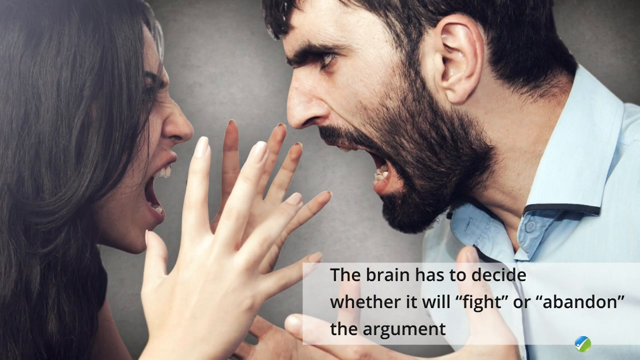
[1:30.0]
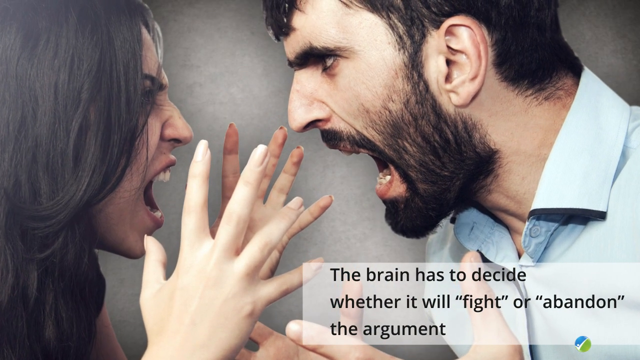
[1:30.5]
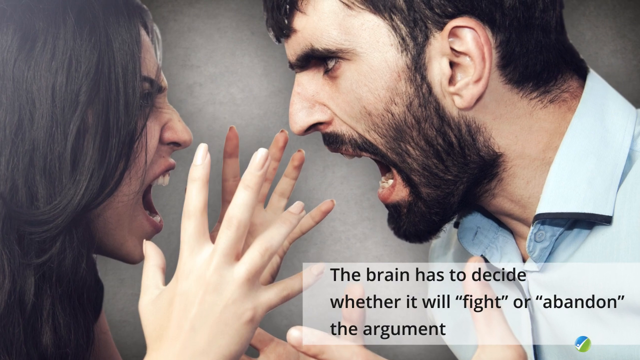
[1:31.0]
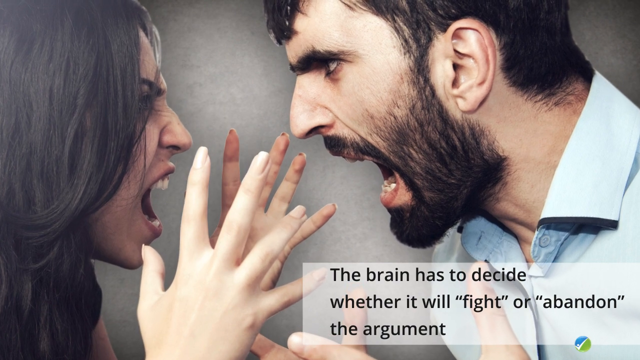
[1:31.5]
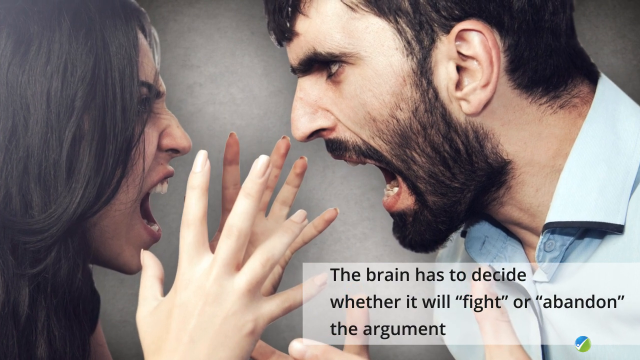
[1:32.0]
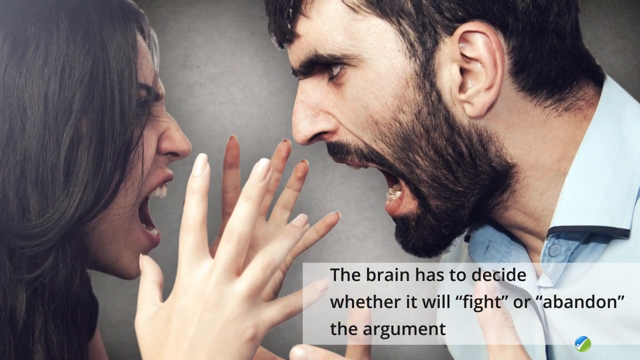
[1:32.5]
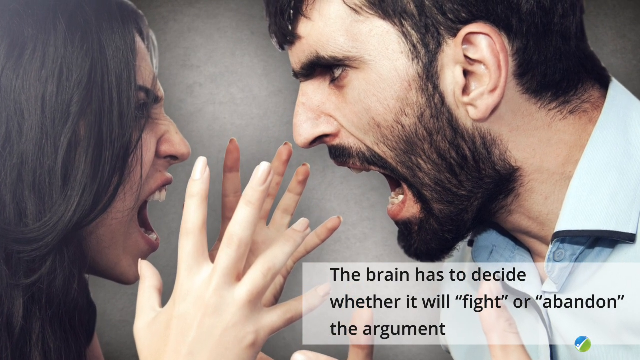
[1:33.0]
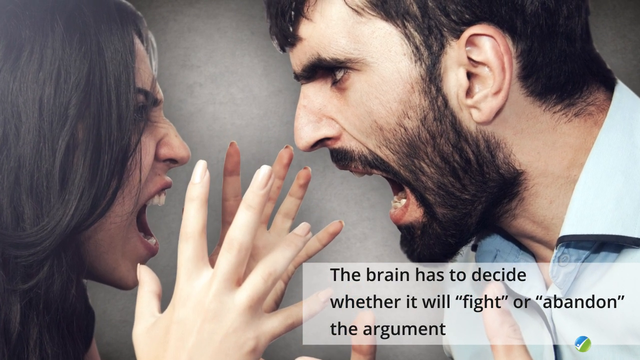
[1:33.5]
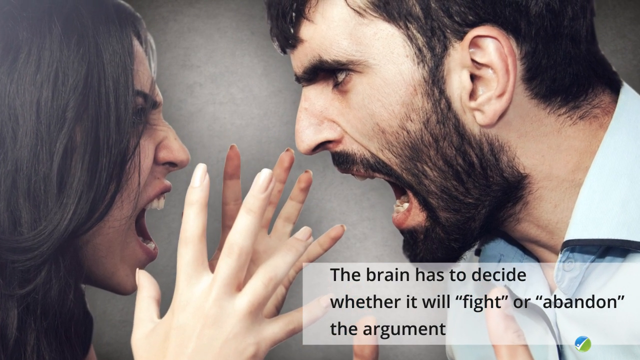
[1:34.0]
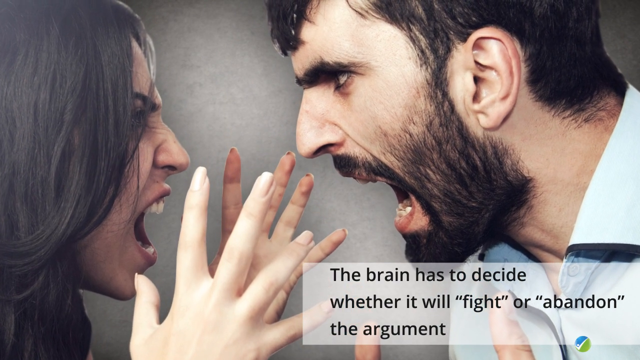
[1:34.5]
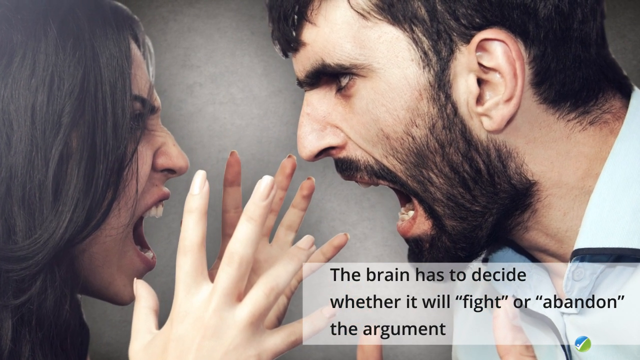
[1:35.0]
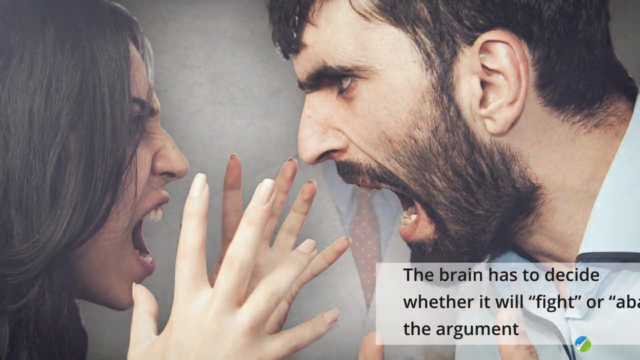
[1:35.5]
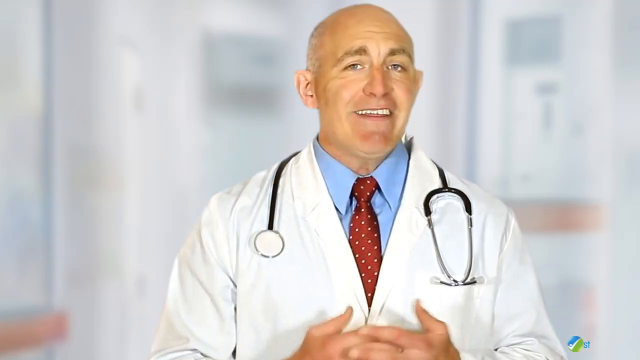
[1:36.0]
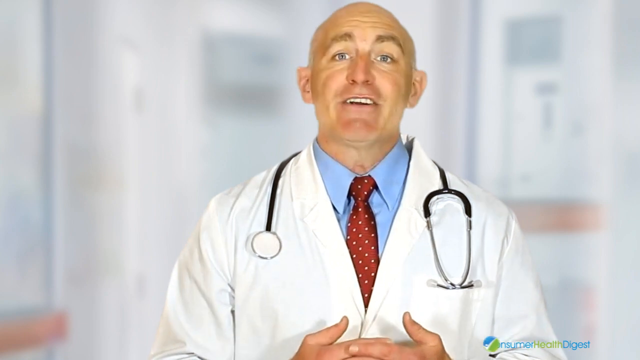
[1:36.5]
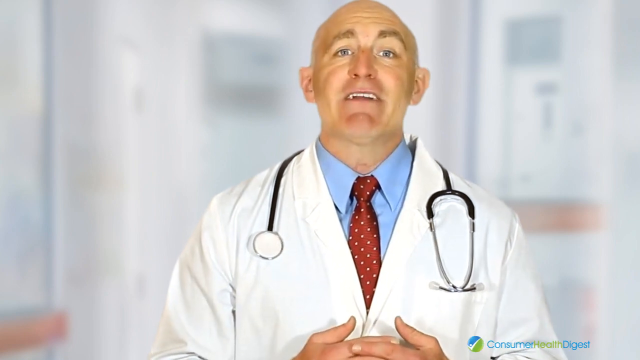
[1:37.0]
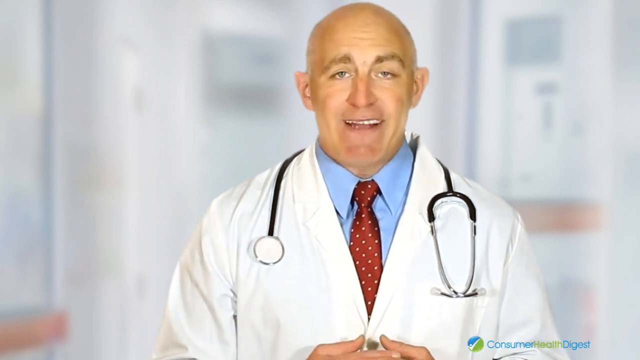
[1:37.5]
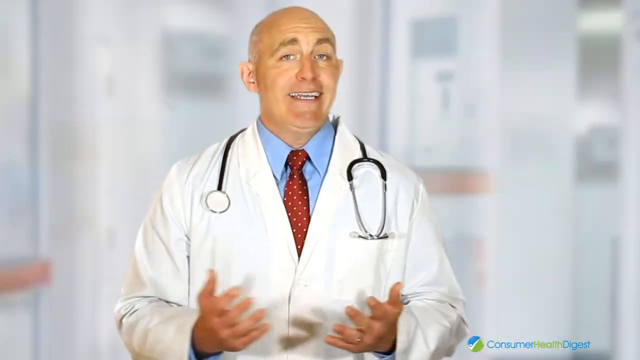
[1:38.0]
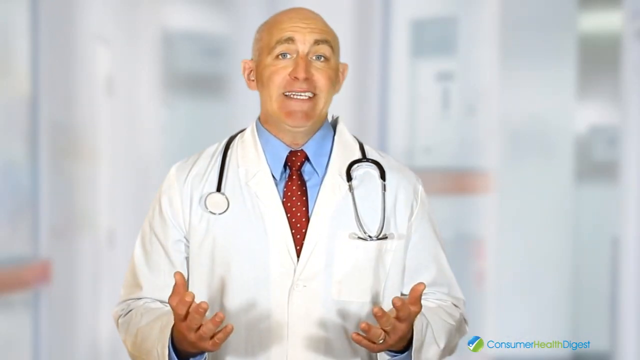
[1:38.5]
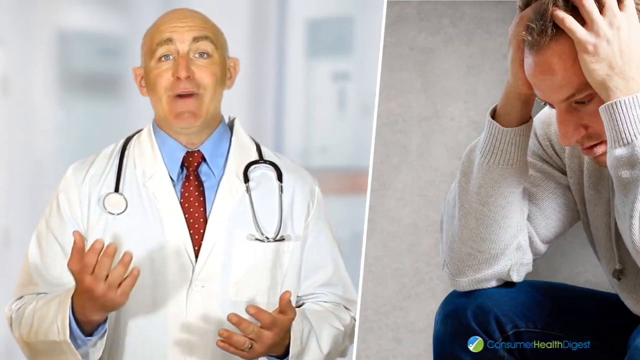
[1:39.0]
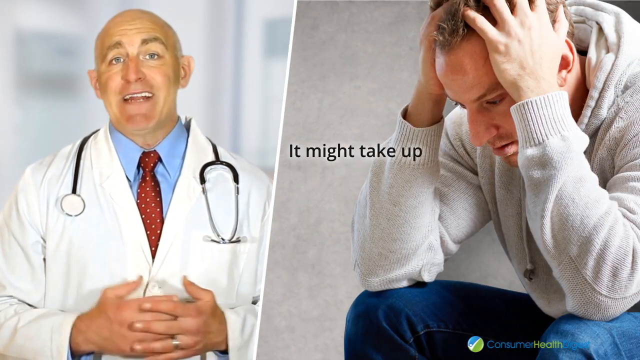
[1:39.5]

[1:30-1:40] The still image of the couple fighting remains on screen: the man on the right is screaming at the woman on the left, who is yelling right back at him with her hands up and open in an exasperated manner. In the bottom right corner, text reads "the brain has to decide whether it will fight or abandon the argument." Both people have dark hair; the man has a full beard and bushy eyebrows, and the woman has long dark hair, with her other facial features hard to make out. The video cuts back to the doctor talking in the middle of the screen, then to an image on the right side of the screen of a man with his hands on his head, holding it there as if some trauma just happened.